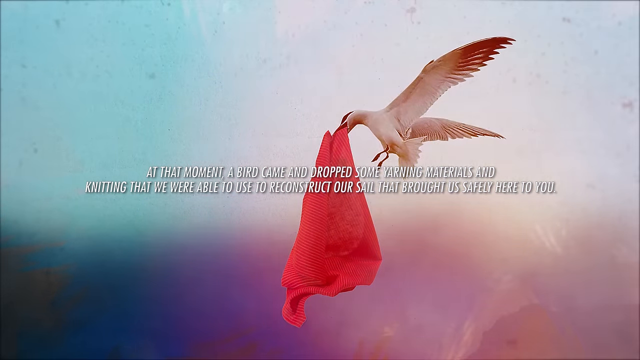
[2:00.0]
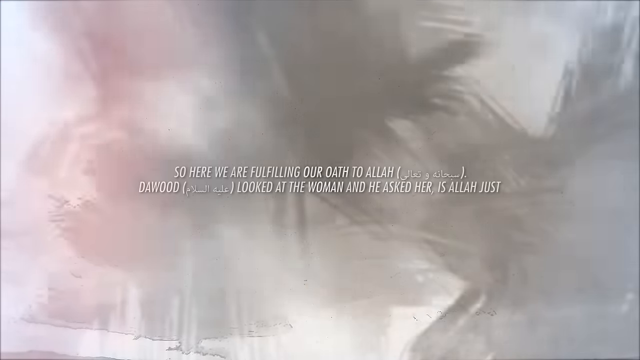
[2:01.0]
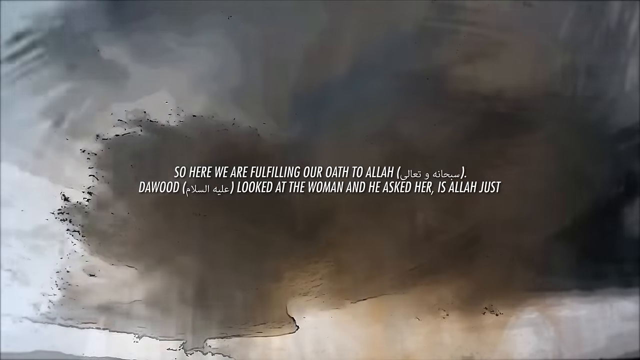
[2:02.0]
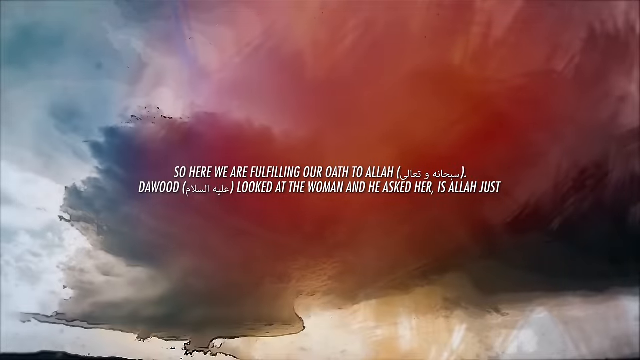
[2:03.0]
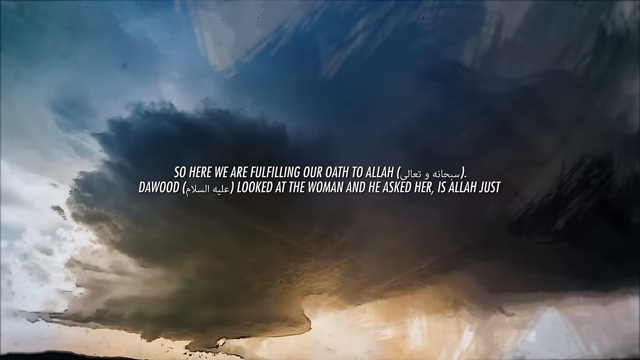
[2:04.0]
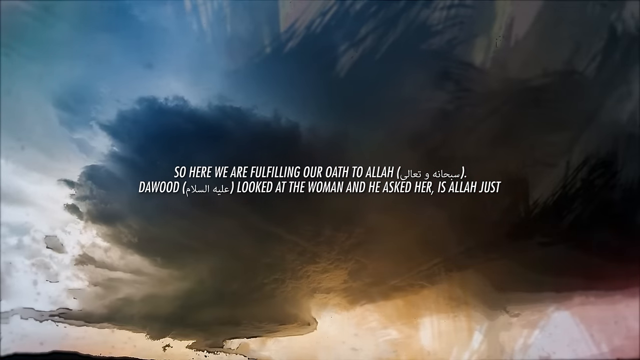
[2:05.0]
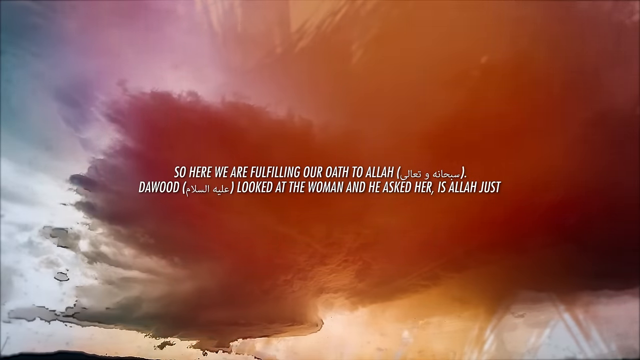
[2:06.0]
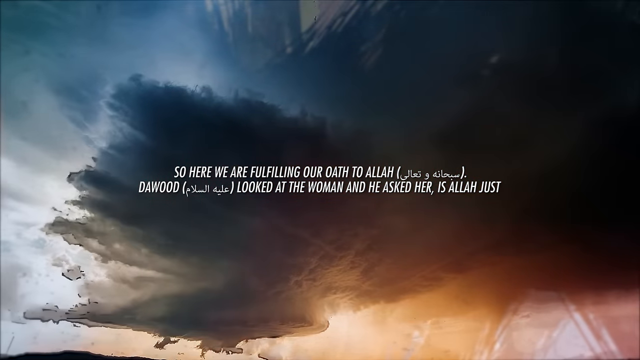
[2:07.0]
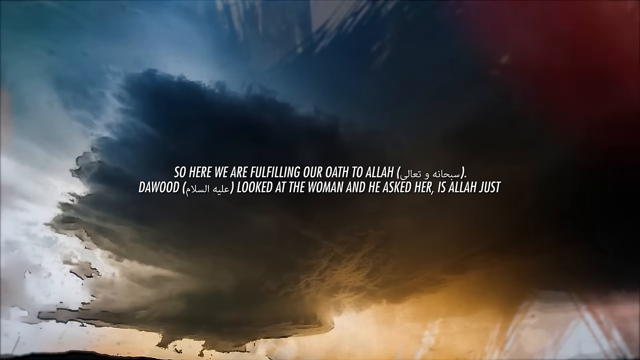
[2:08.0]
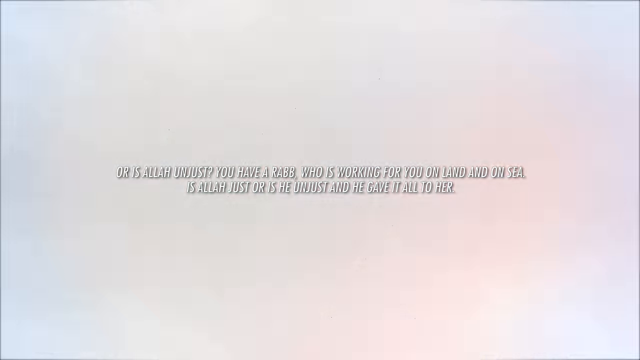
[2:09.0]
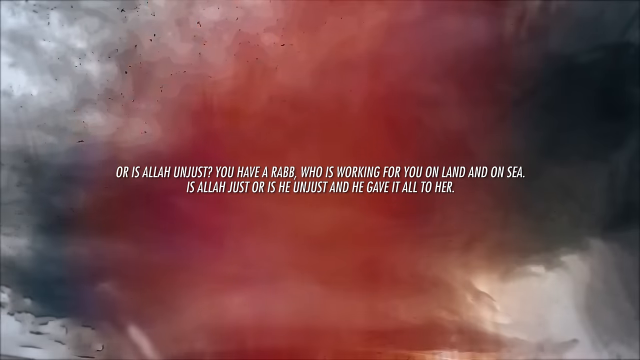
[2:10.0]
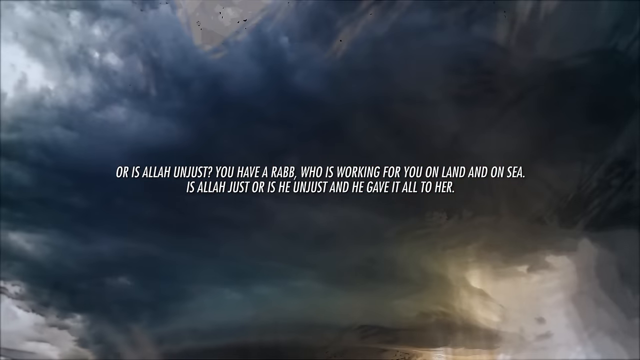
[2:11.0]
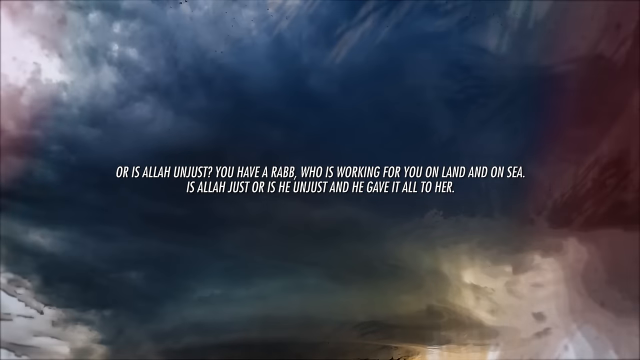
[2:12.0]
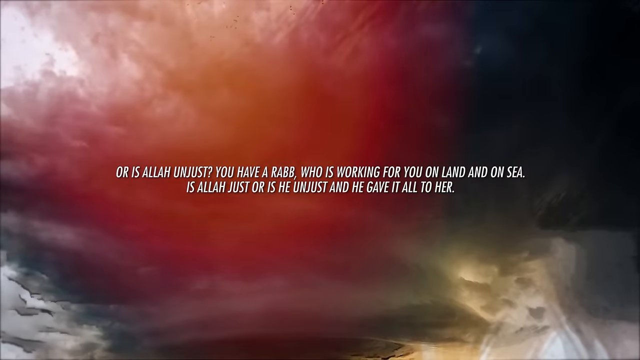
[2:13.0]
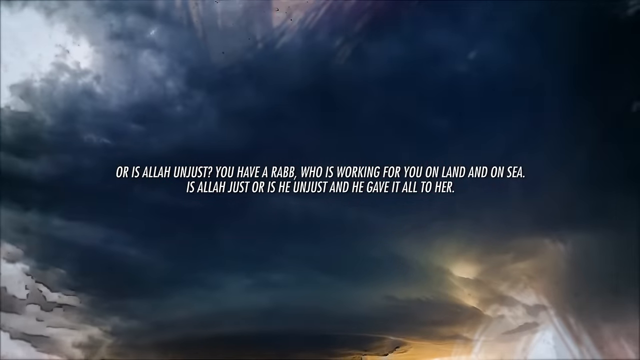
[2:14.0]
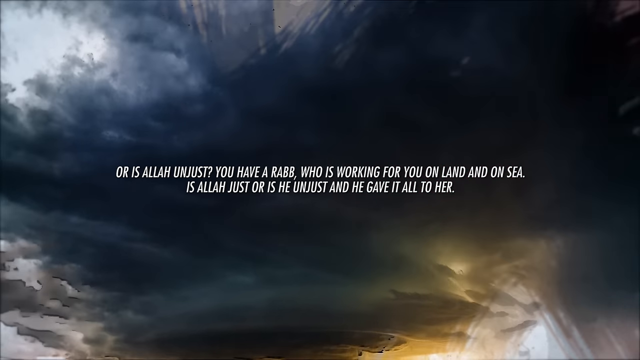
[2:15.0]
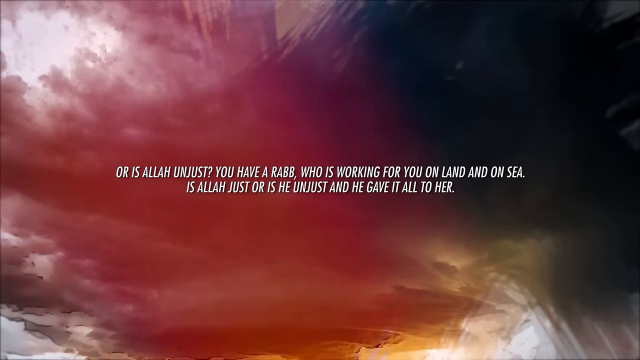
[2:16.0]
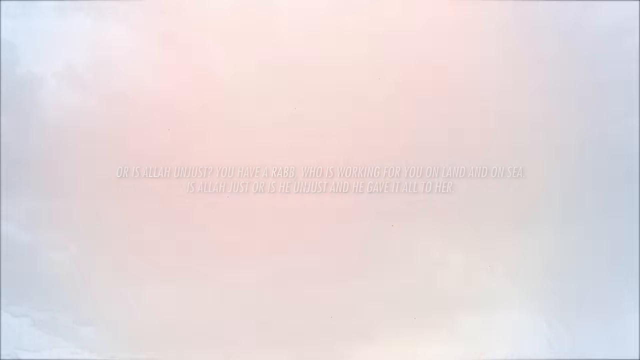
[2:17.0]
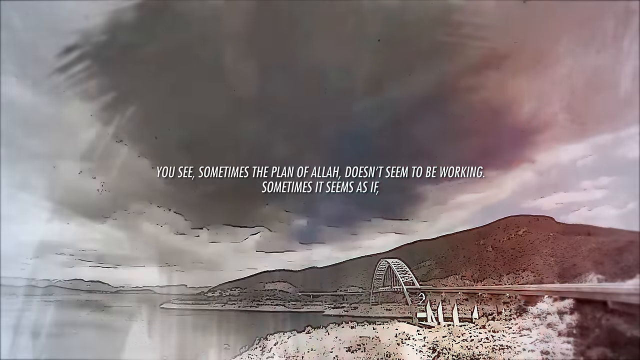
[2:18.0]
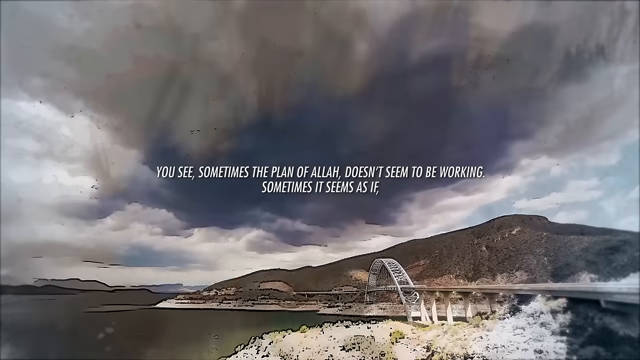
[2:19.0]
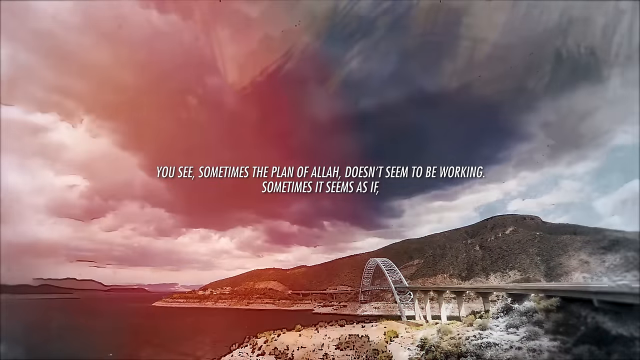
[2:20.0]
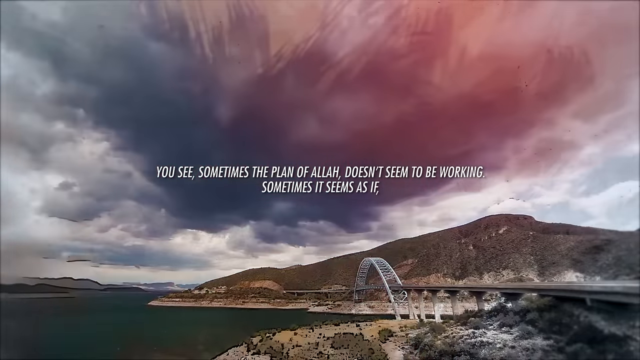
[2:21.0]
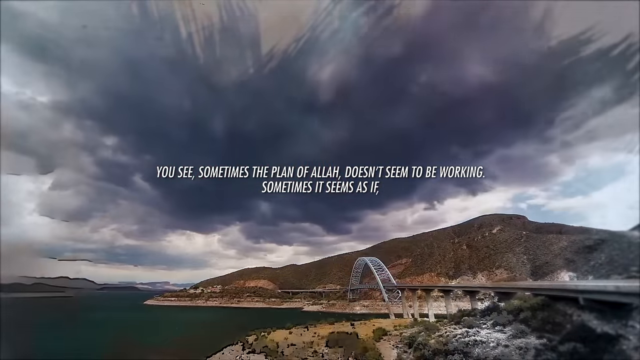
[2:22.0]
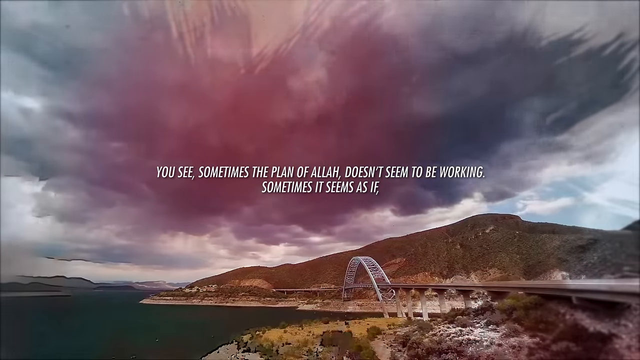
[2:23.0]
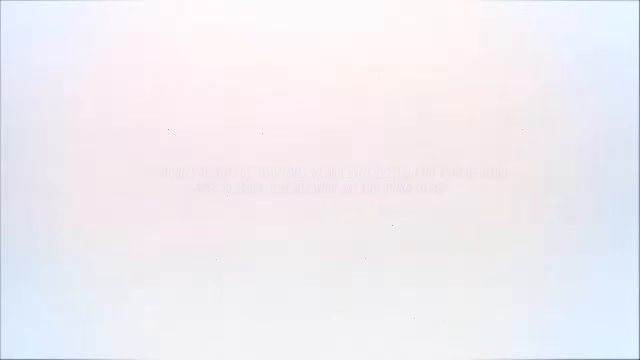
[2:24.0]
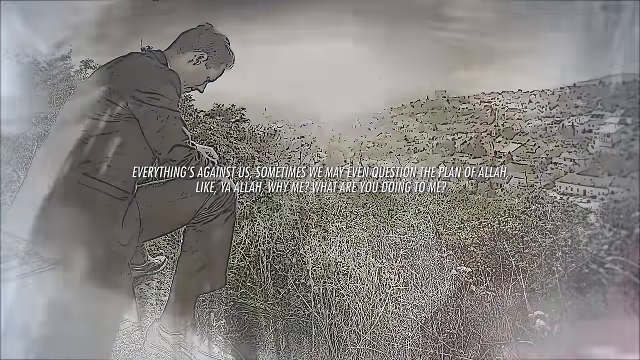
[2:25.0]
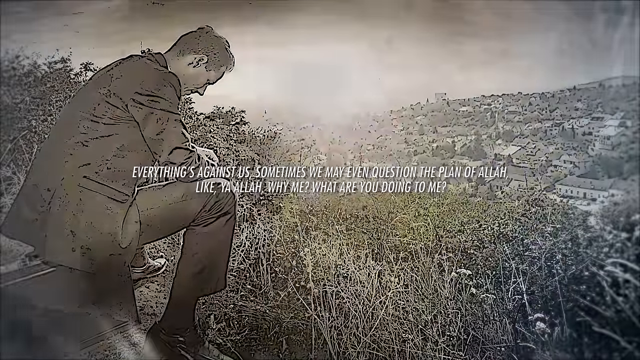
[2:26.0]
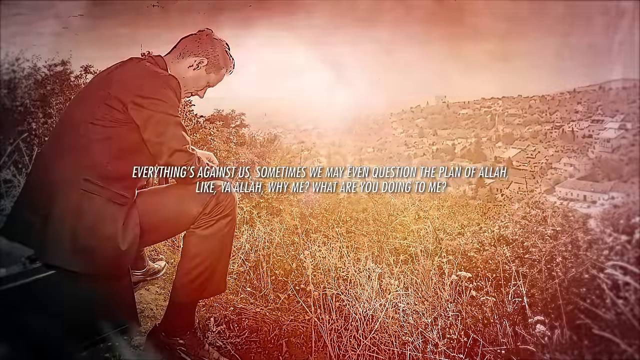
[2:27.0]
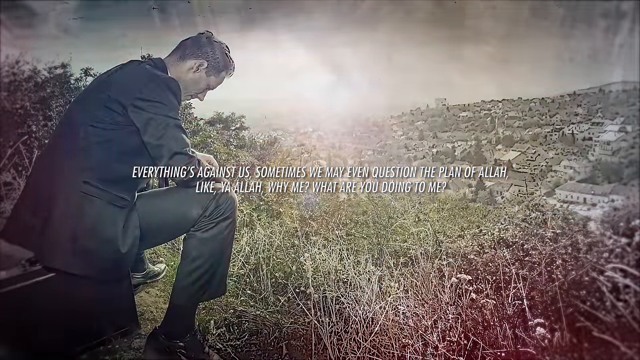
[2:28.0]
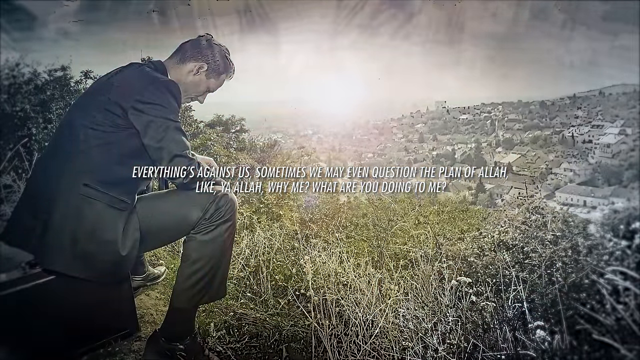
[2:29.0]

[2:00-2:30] The bird is shown before another flash of light, and the image transitions to a view from the ground looking up at the sky, with dark gray clouds overhead. Shades of blue, purple and red light come in, making the image look brighter. Text in the middle says that the characters are fulfilling their oath to Allah, and that Dawood then looks at the woman and asks her, "is Allah just?" In the image, a big cloud moves out of the way, and behind it rays of light appear near the bottom and lower left of the image; the light at the bottom is more golden, while toward the left it is whiter. The red light fades in and out, and then there is another view of clouds moving from left to right. The text continues as another image shows clouds moving away over an area near water, like a bay, with a bridge connecting land on the near side with land on the other side. There is a hill and rocks in the background.